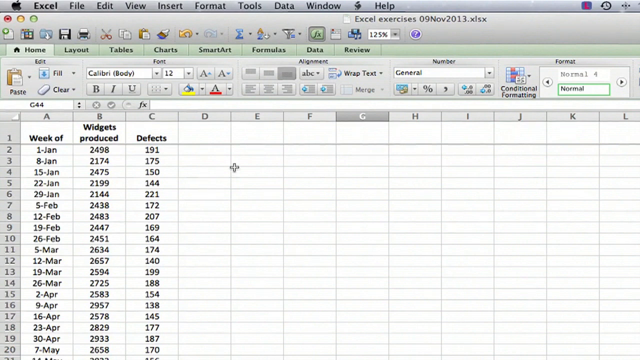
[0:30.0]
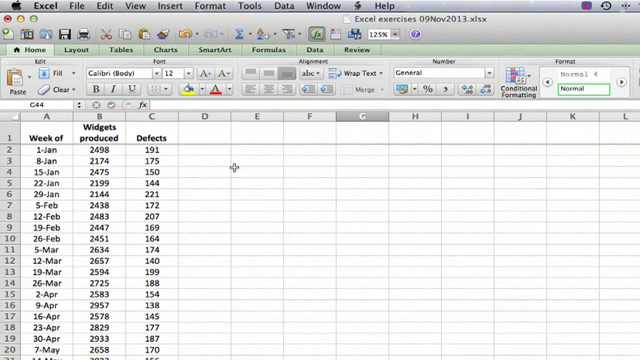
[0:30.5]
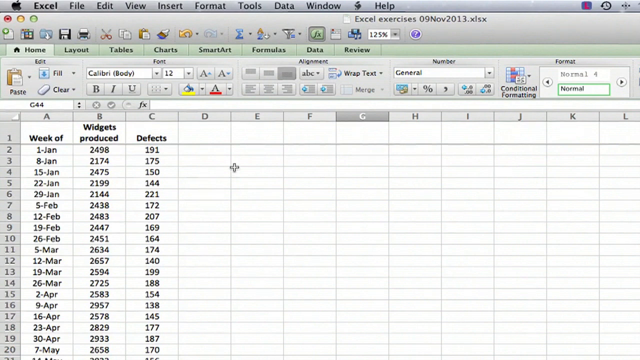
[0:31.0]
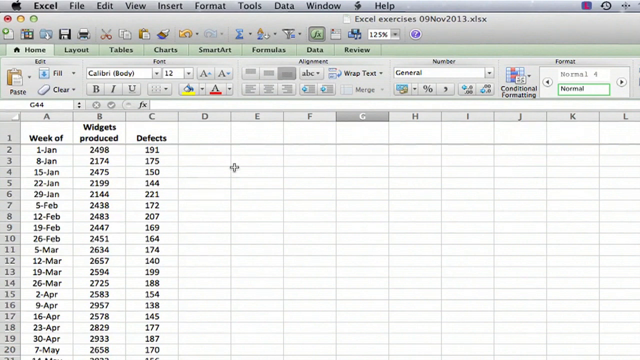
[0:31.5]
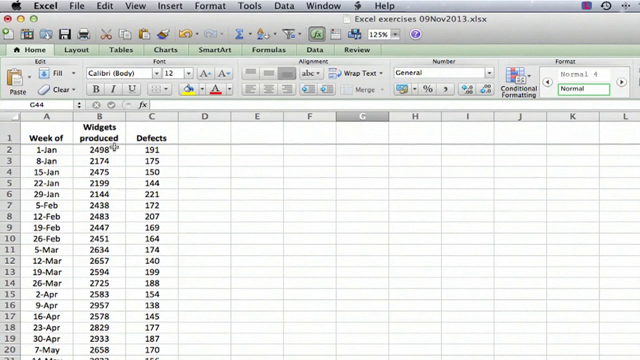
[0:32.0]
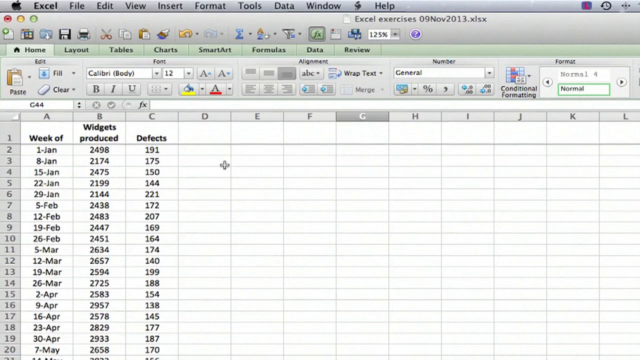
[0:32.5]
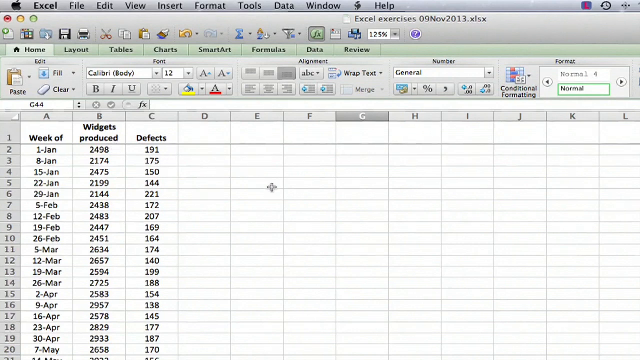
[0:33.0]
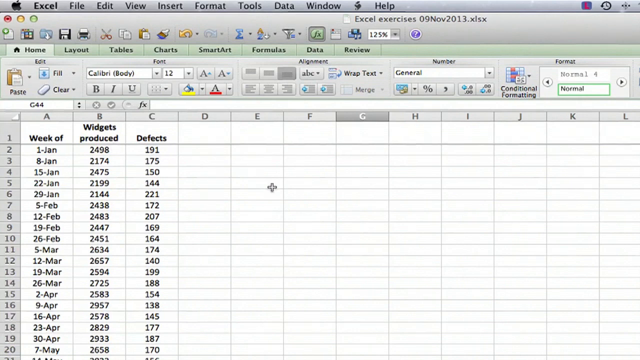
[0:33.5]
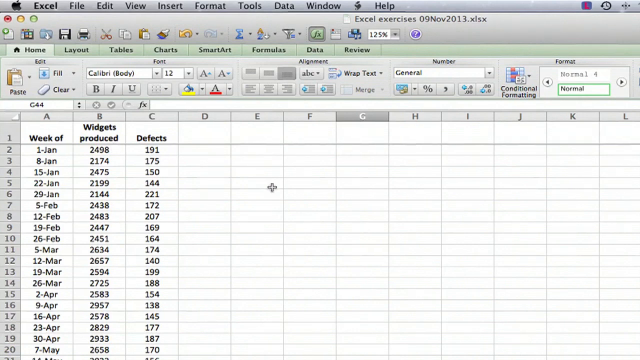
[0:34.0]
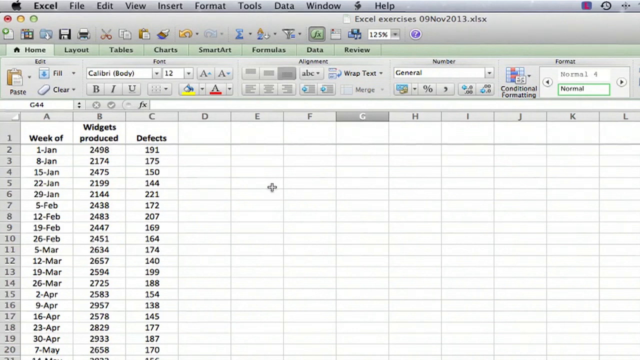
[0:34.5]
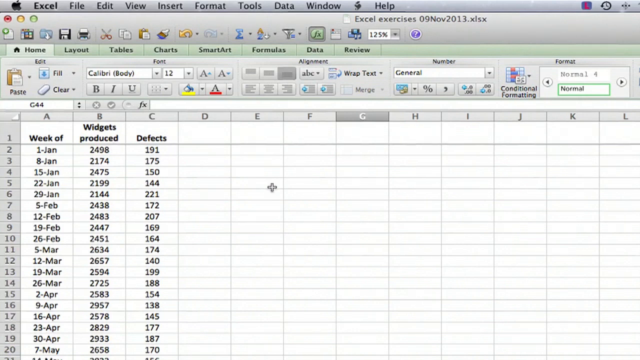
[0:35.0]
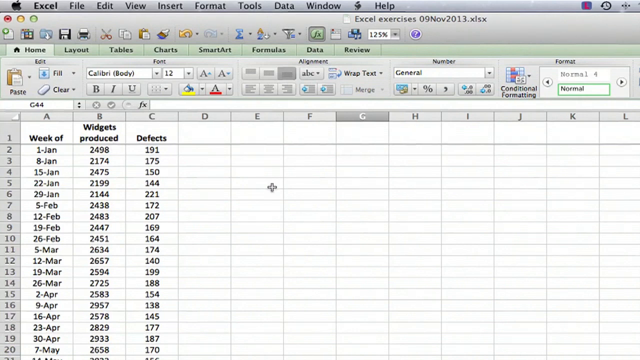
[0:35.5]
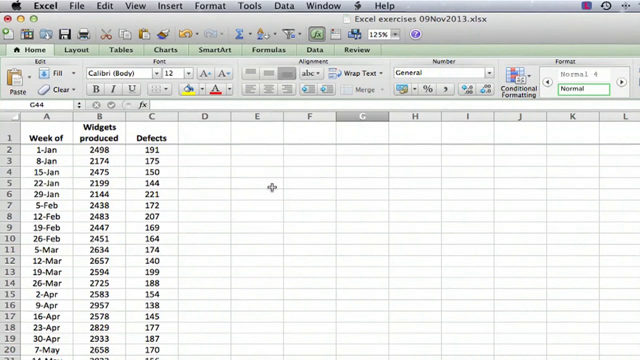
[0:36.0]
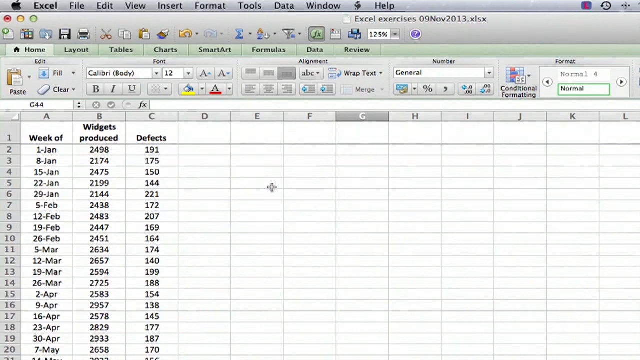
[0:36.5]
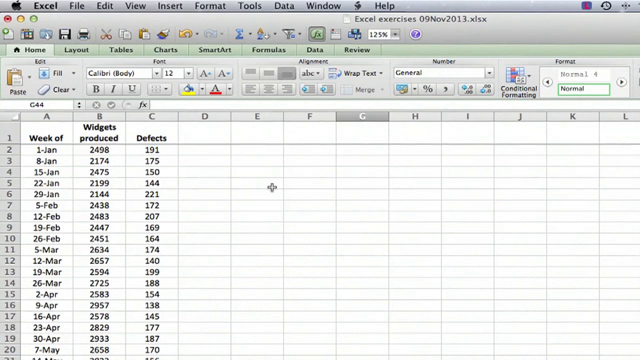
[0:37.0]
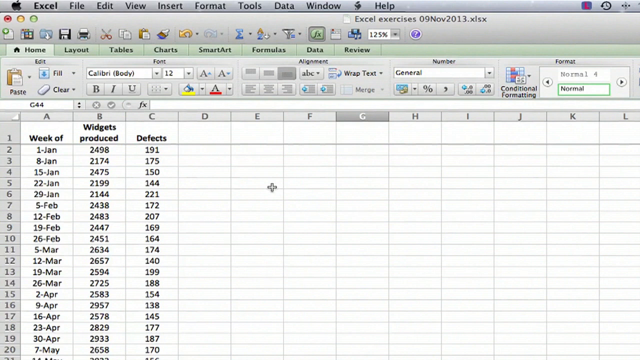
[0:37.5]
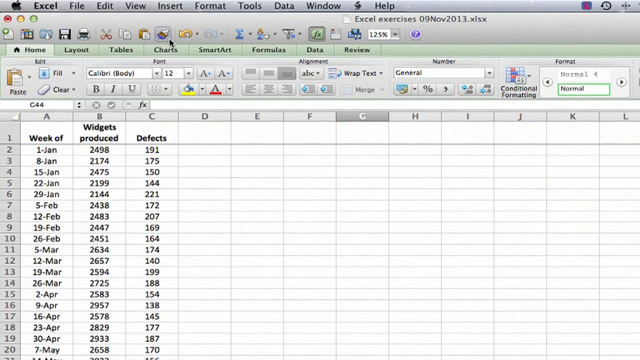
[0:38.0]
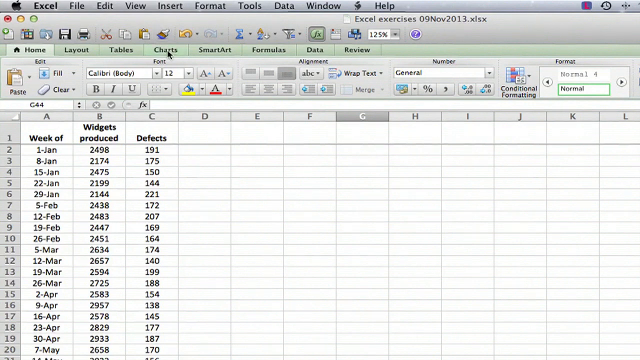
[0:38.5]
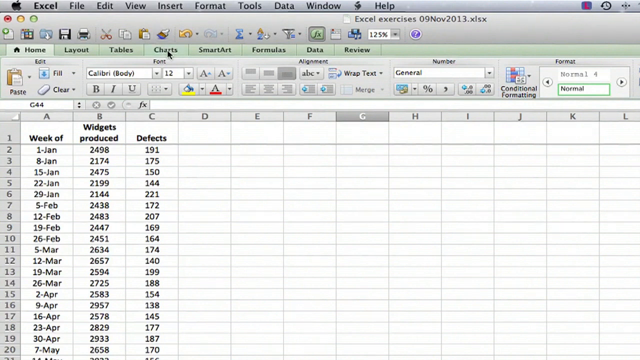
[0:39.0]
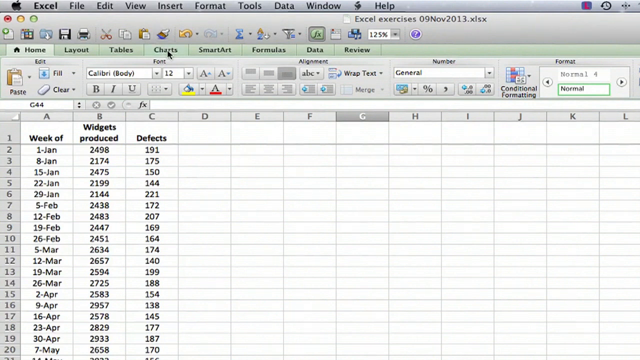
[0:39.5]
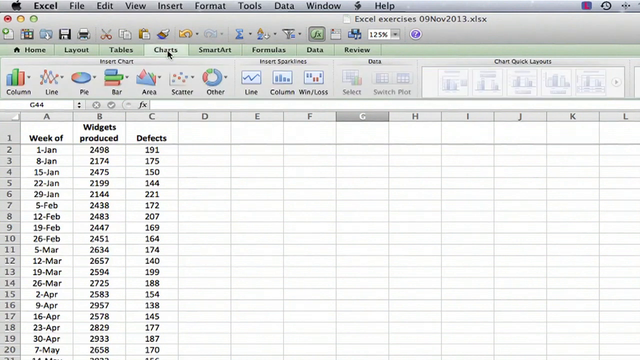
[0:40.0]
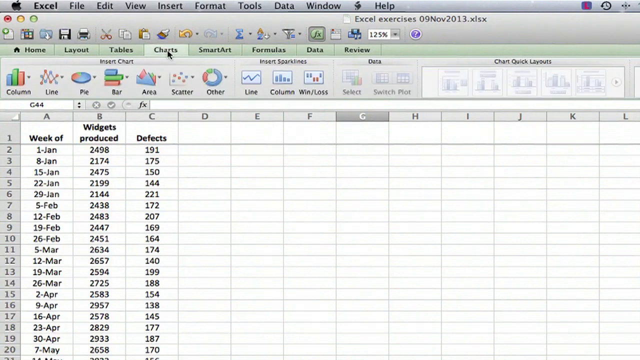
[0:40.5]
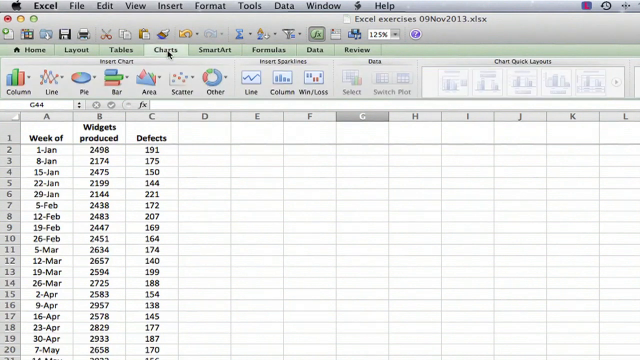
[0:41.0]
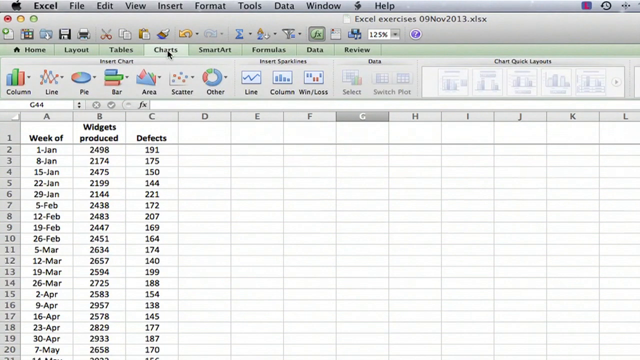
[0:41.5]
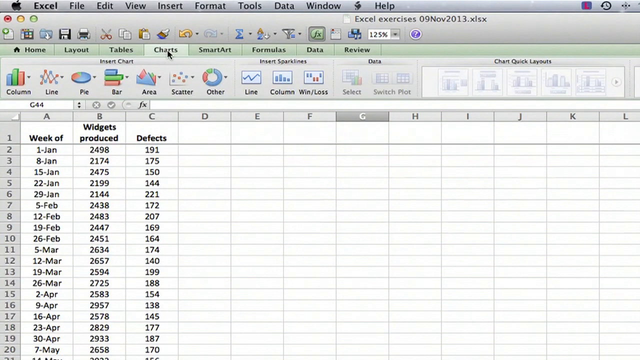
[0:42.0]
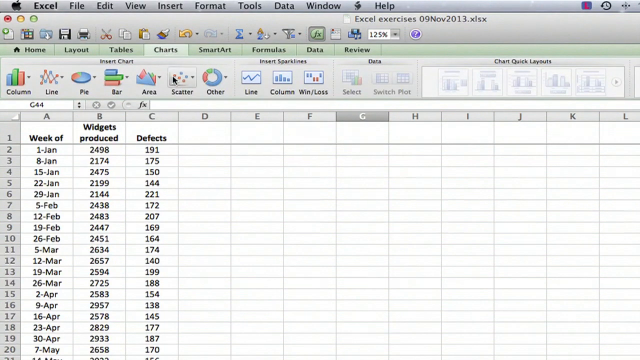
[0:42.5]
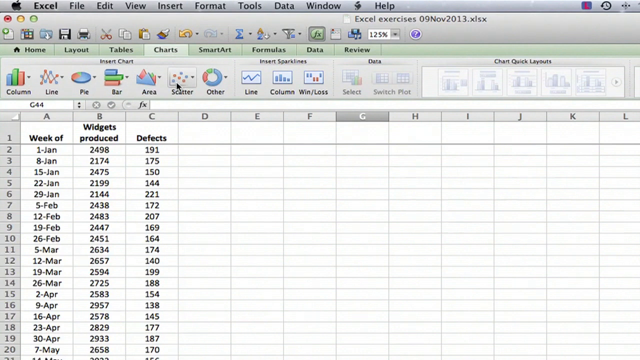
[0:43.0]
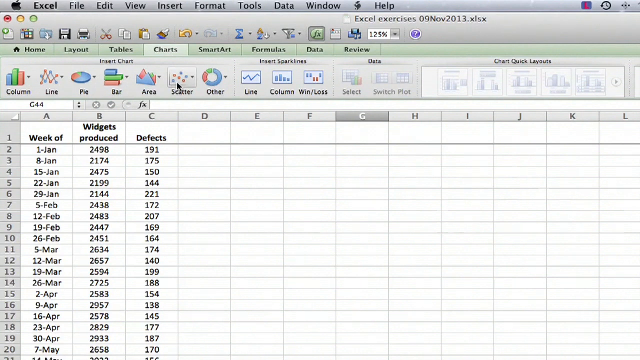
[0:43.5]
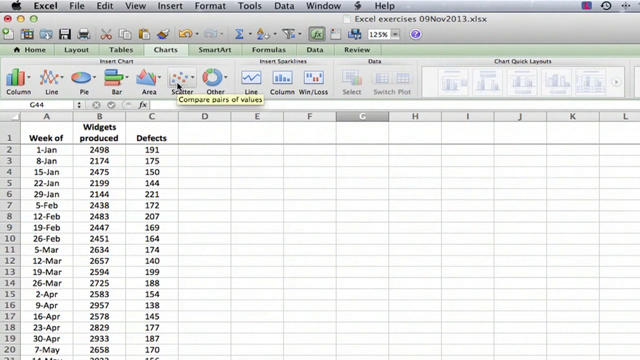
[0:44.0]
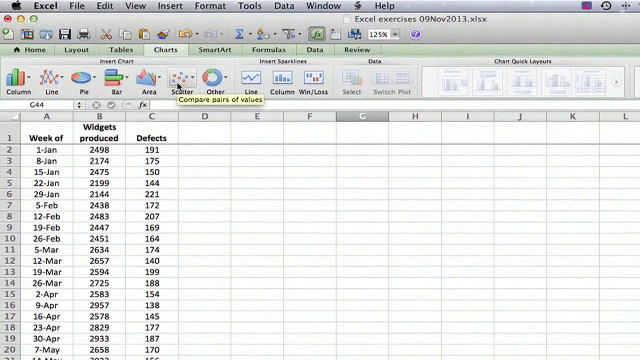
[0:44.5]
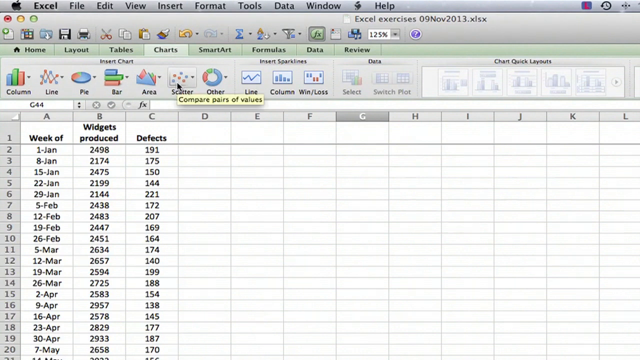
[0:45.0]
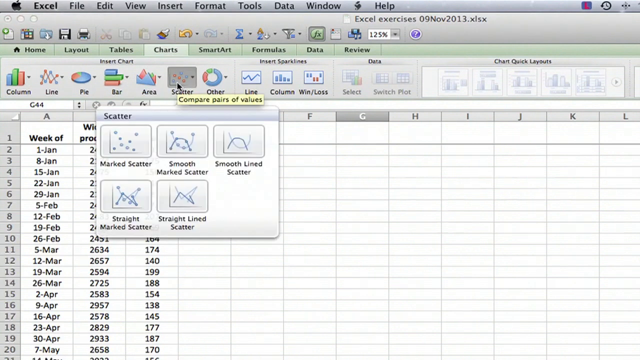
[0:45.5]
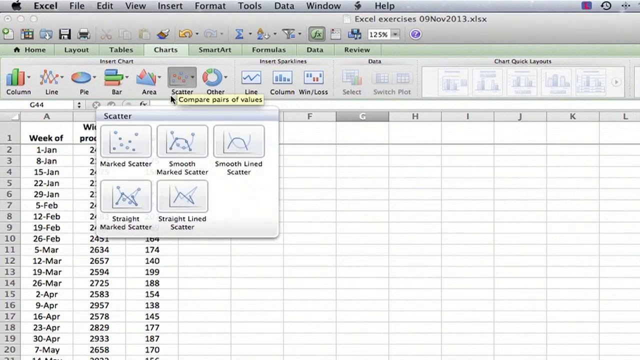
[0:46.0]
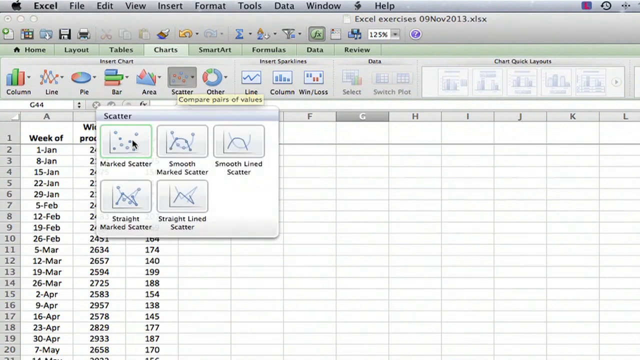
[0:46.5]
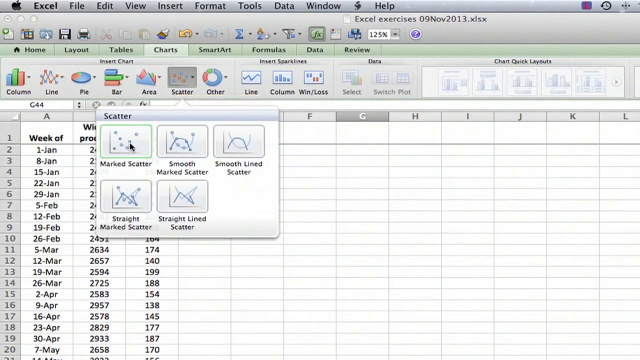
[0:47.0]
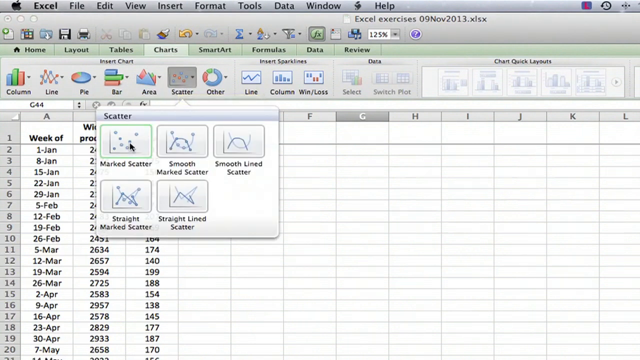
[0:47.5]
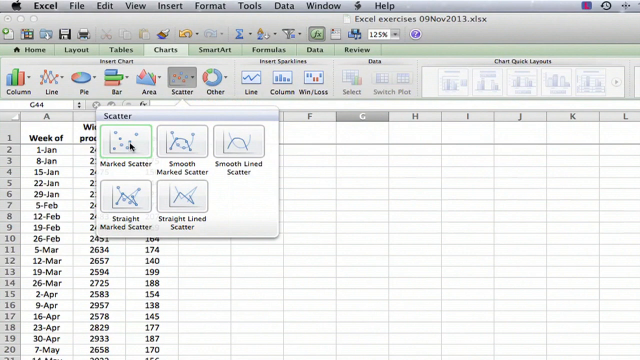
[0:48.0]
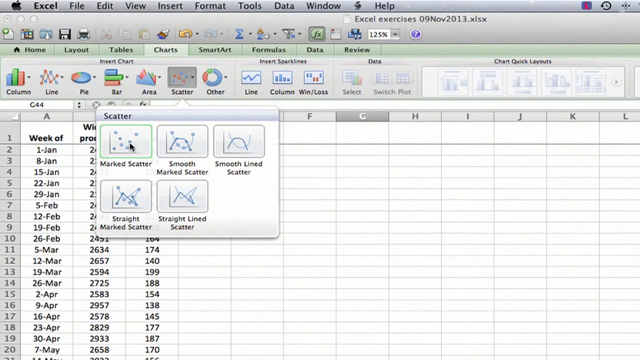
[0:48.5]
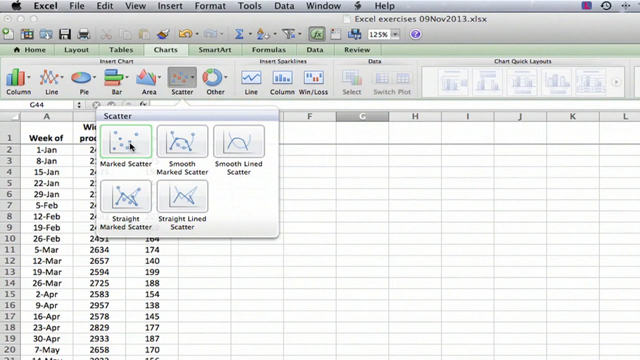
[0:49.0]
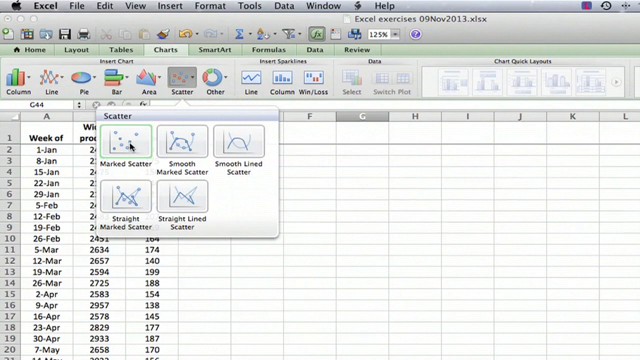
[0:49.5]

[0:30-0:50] The Excel document is in focus. The cursor moves up to the Charts tab, and Scatter and then Marked Scatter are selected as the chart options. The data appears to be somewhat extensive, in columns labeled Week Of, Widgets Produced and Defects. The screen shows only 24 rows and half of the 21st row of data. The Week Of column shows dates formatted as the day number, a dash and a three-letter month abbreviation. The Widgets Produced column holds 4-digit numbers, all starting with 2, and the Defects column holds three-digit numbers, all starting with 1 or 2. The data is centered in each column, and there are no background colors or fill in the document. The file is titled "Excel Exercises 09NOV2013.xlsx".